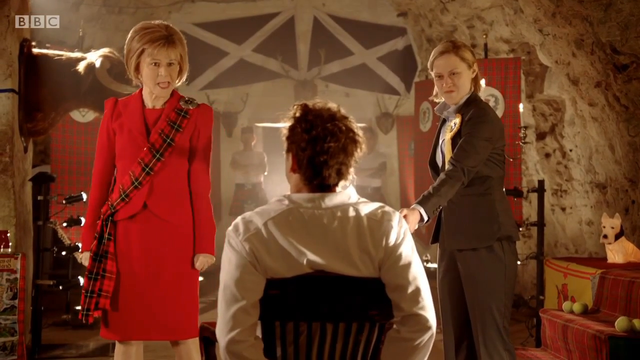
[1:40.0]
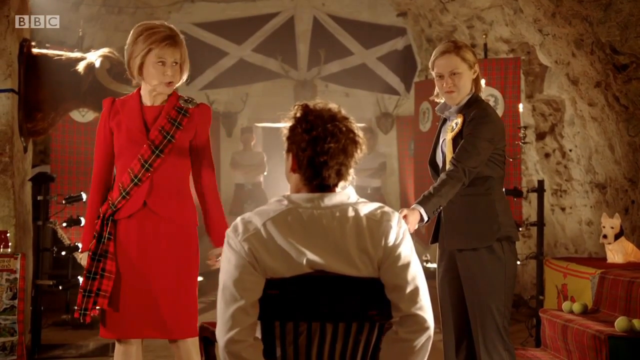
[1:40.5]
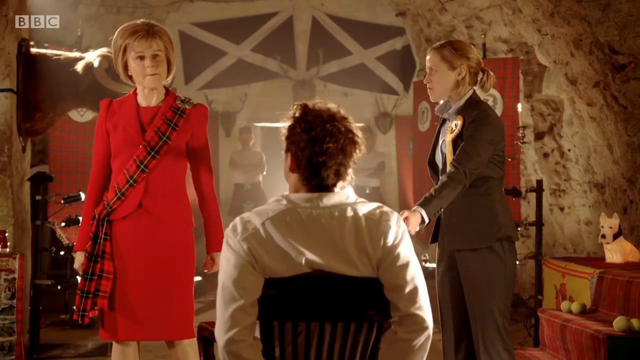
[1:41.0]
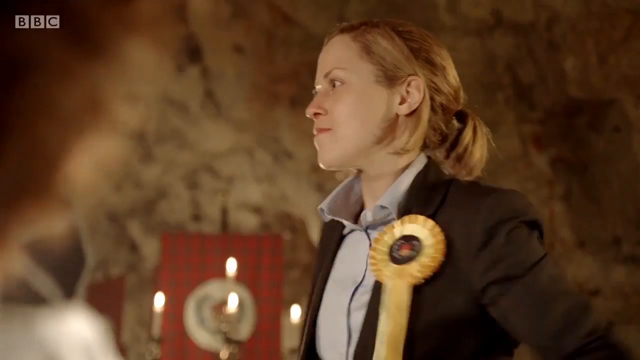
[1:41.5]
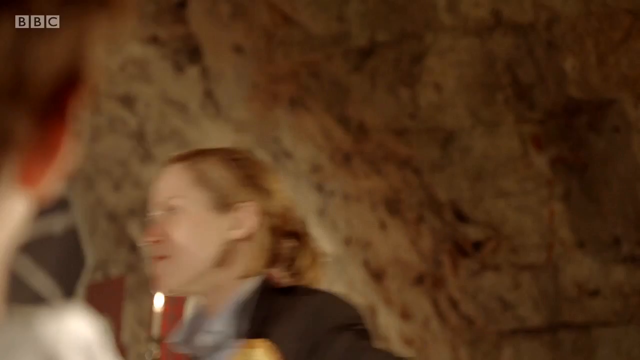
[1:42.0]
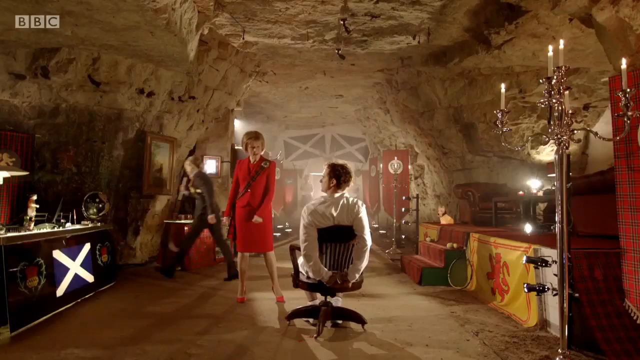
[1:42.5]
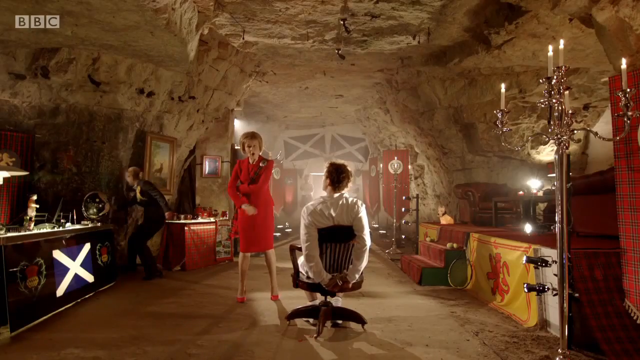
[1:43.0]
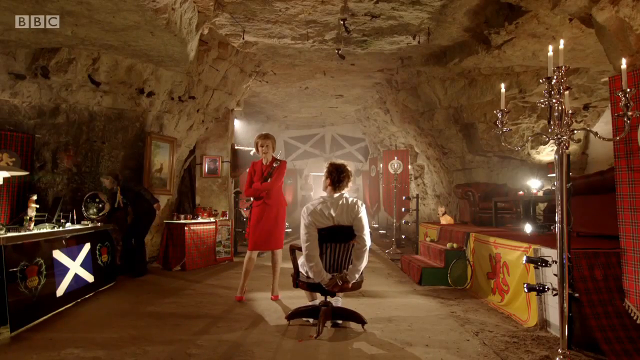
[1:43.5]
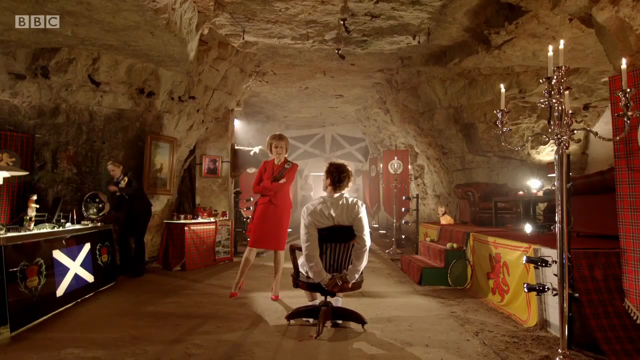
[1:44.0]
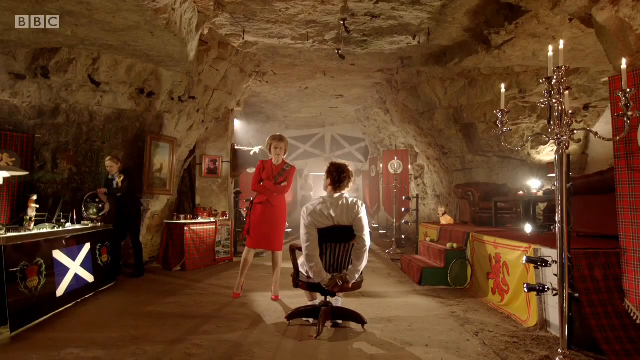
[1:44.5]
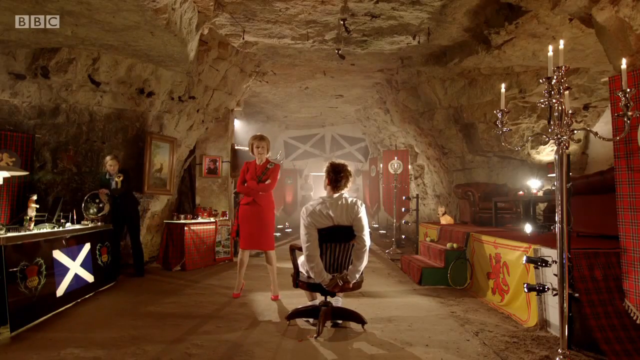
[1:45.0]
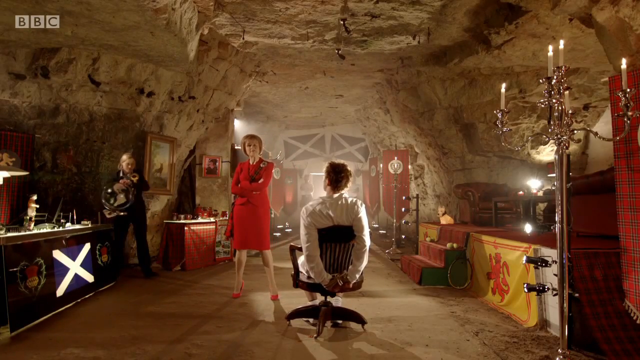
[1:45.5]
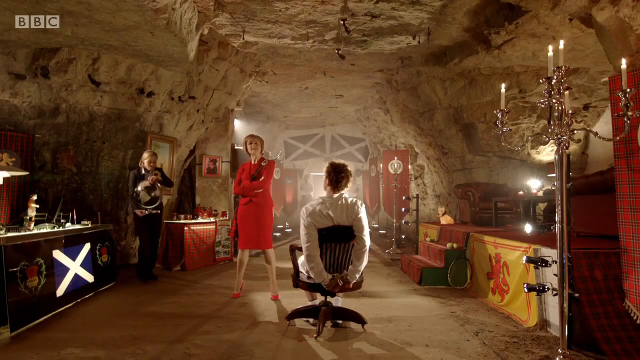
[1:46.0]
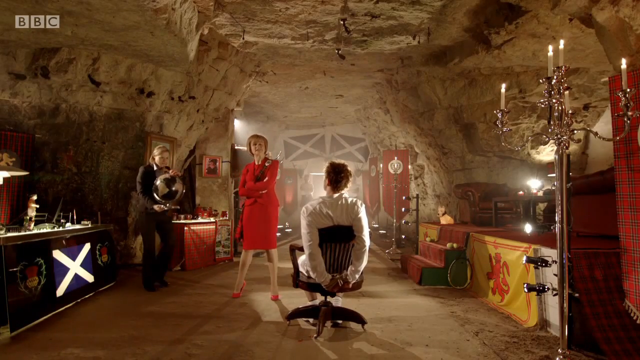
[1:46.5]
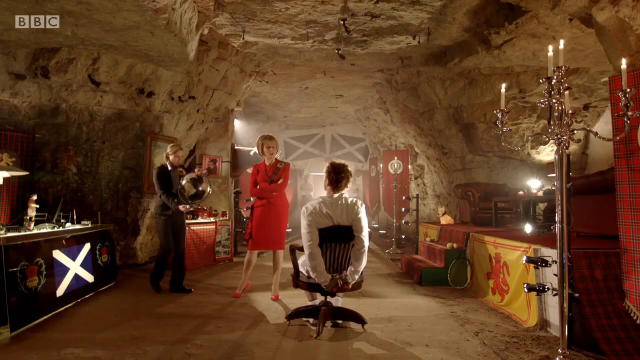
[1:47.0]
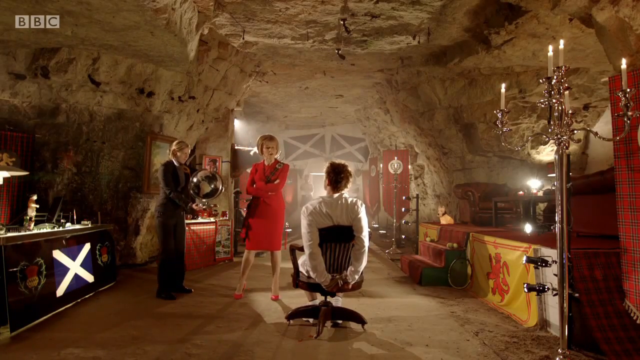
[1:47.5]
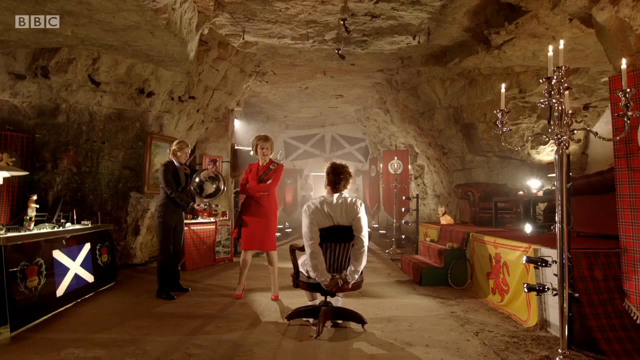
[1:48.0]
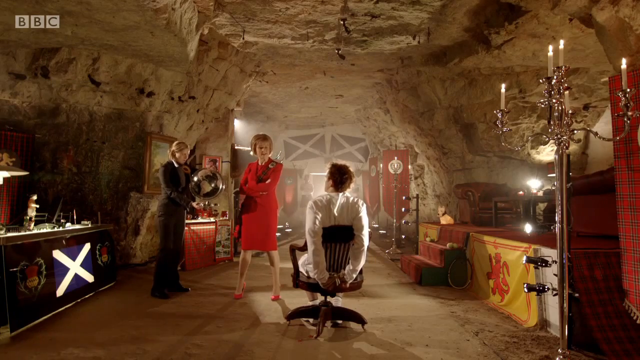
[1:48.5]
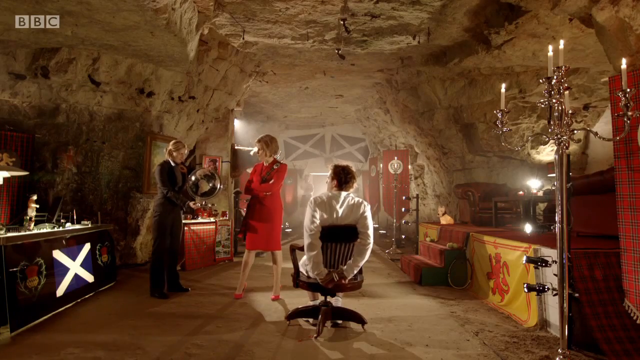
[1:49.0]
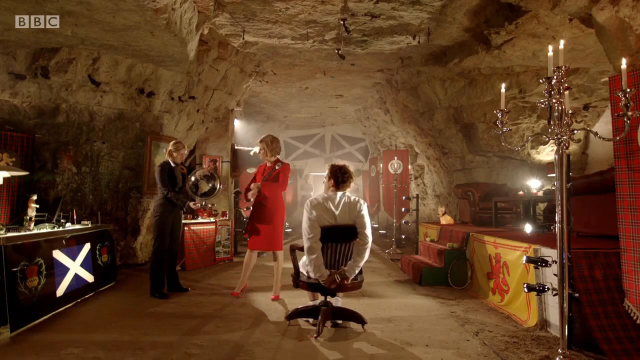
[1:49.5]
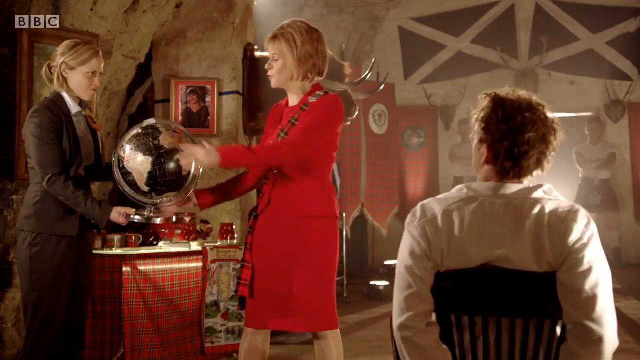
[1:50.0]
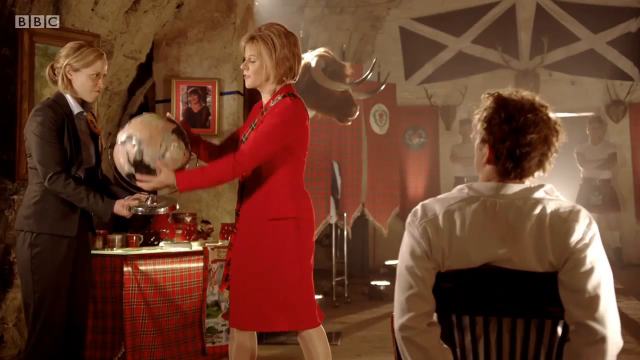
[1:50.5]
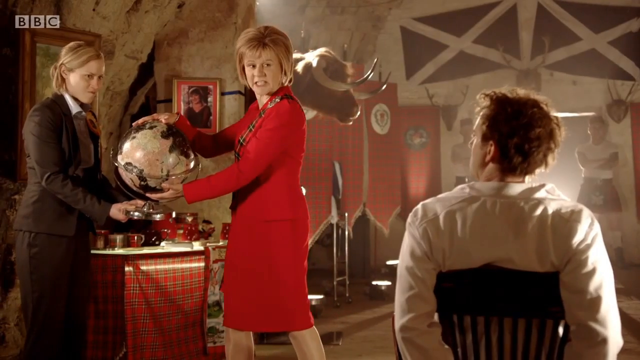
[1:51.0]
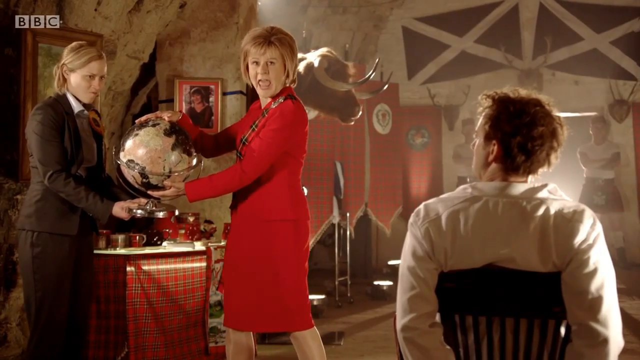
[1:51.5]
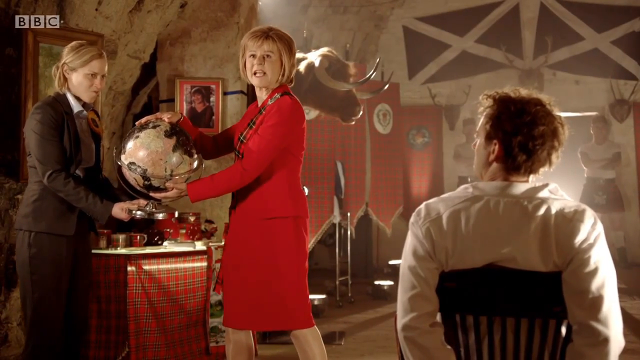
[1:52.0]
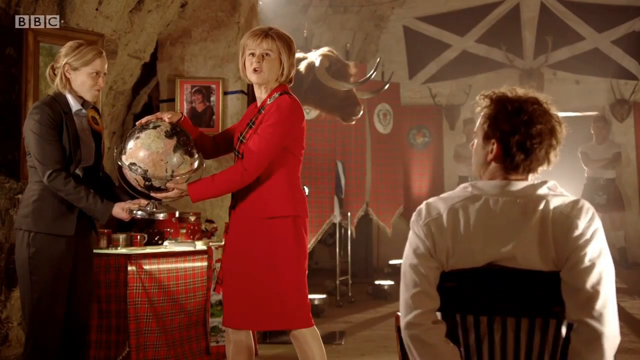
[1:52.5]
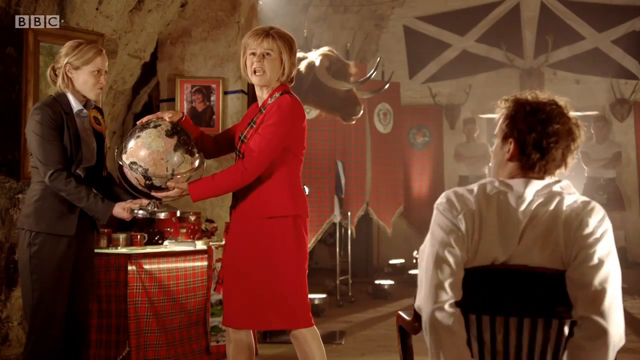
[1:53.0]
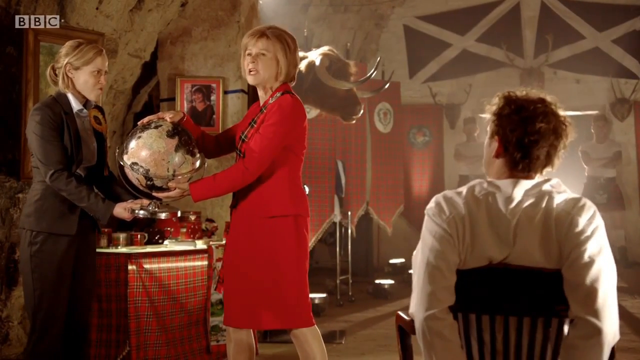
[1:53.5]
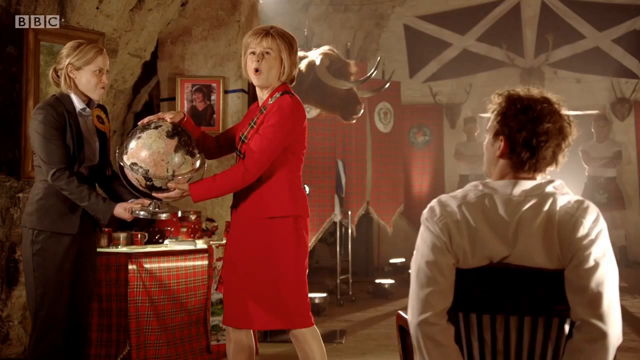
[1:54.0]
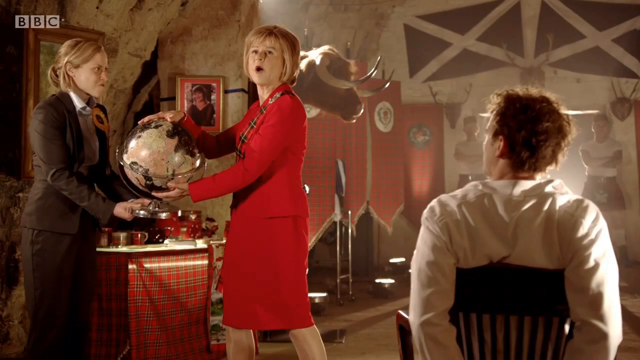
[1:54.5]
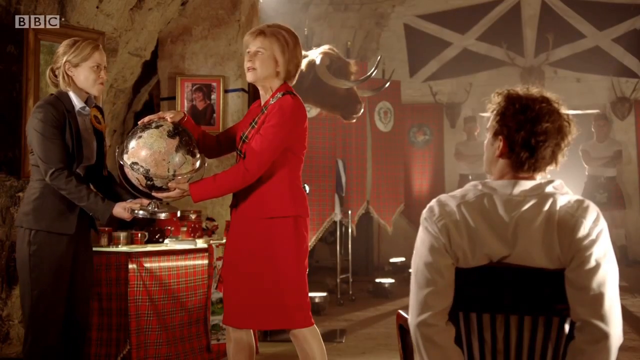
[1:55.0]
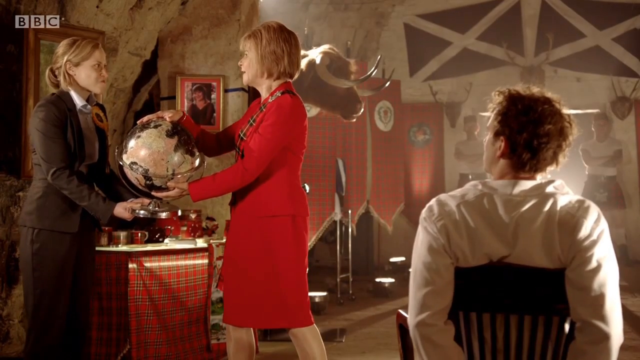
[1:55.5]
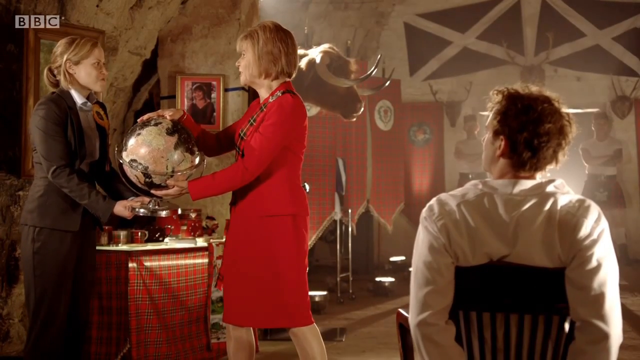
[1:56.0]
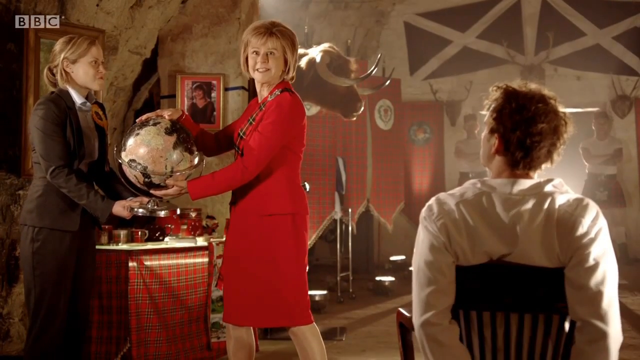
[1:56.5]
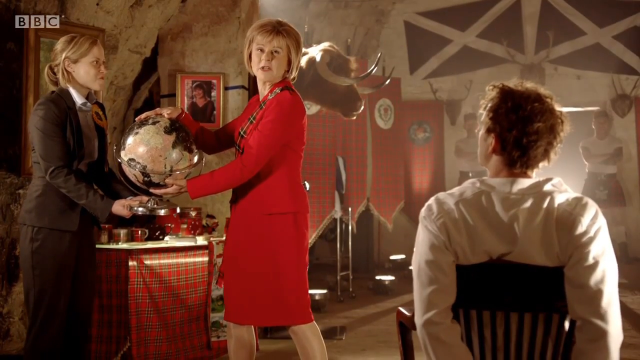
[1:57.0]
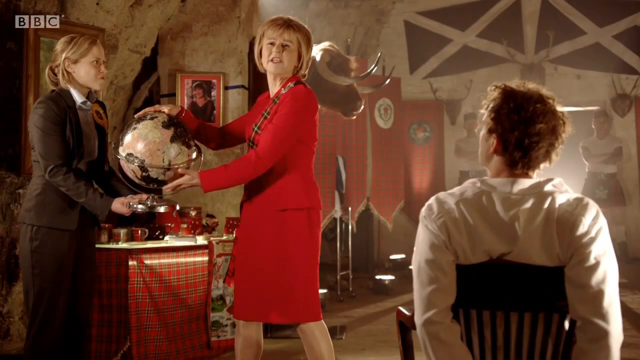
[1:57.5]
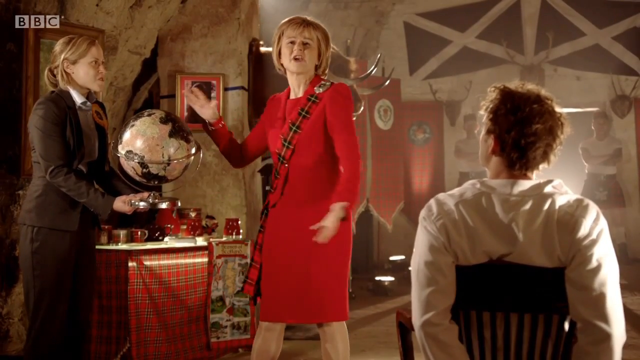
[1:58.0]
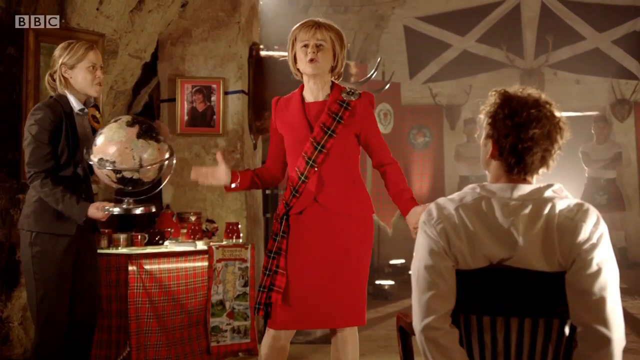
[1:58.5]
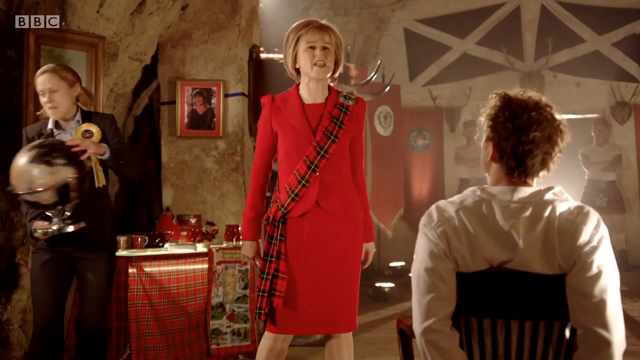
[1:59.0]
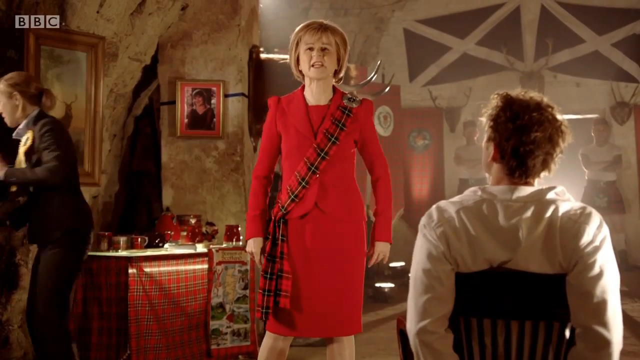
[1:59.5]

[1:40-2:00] A shot includes two women and a man. The woman on the left of the frame wears a red jacket and a red skirt, along with a strip of red and black squares. On the right is another woman in a dark jacket and black pants. In the center of the frame is a man in a white shirt tied to a chair. The woman in the black jacket and dark pants walks to the left of the frame, takes a world map and brings it to the woman in the red dress, who turns the world map and speaks first to the camera and then to the woman in the black jacket. In the last seconds, the woman walks a few steps toward the man, stands still and speaks, moving both arms and slightly shaking her head.